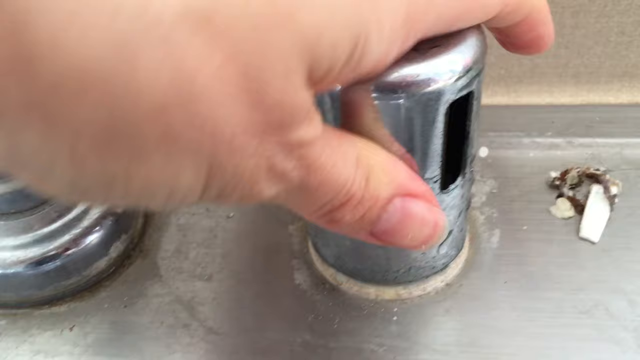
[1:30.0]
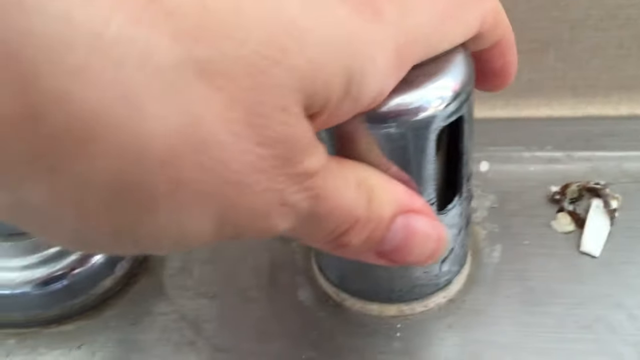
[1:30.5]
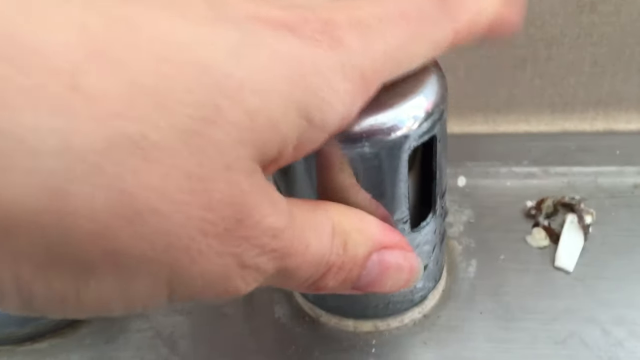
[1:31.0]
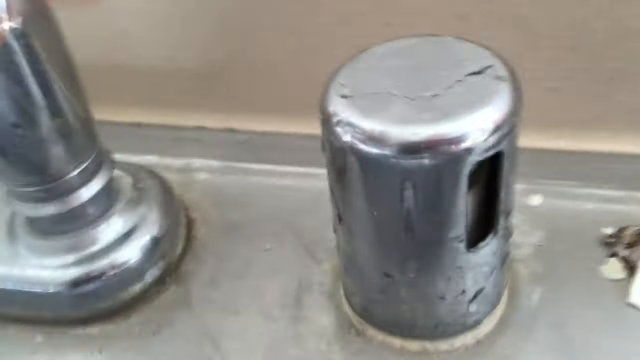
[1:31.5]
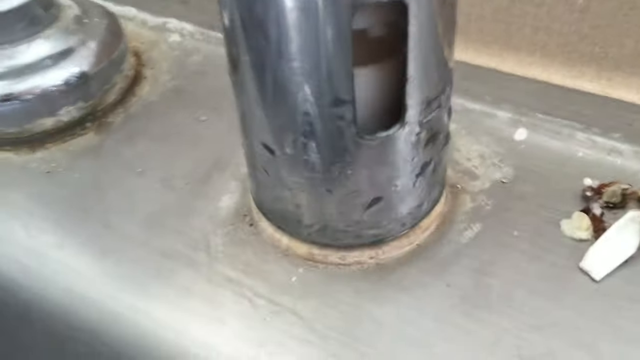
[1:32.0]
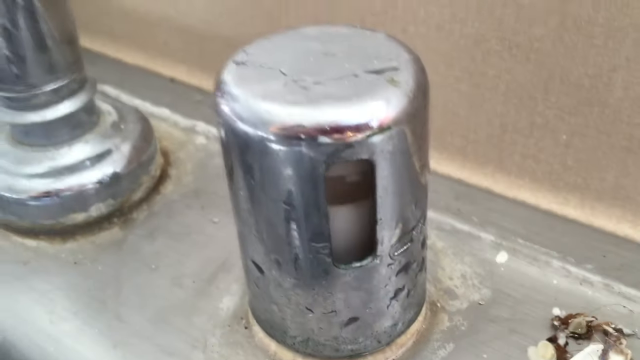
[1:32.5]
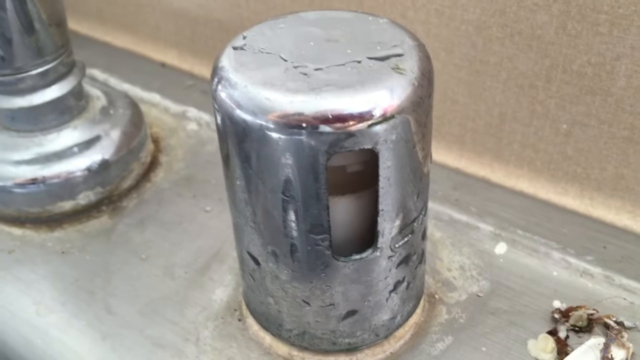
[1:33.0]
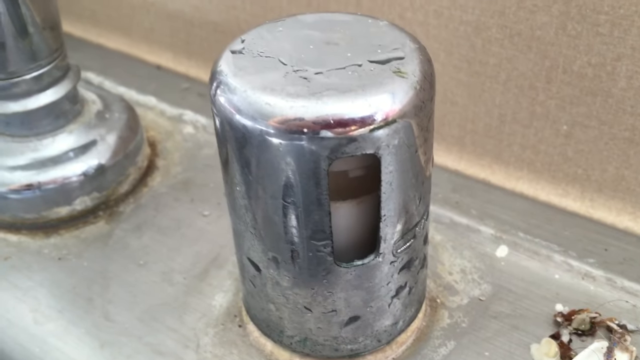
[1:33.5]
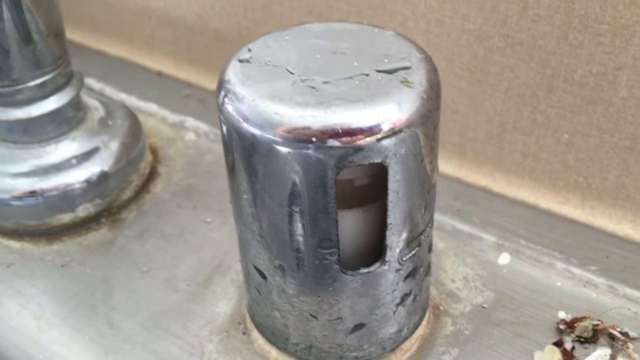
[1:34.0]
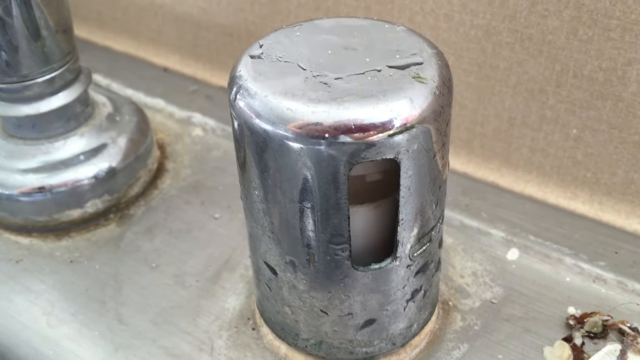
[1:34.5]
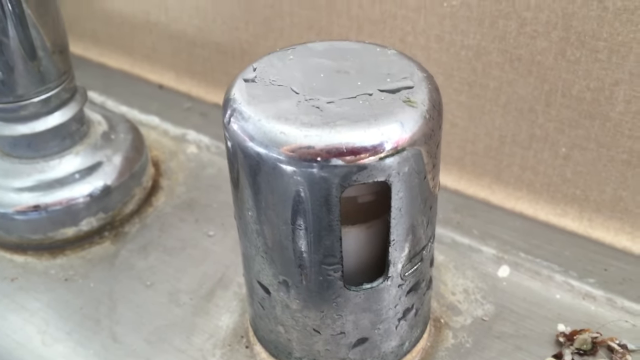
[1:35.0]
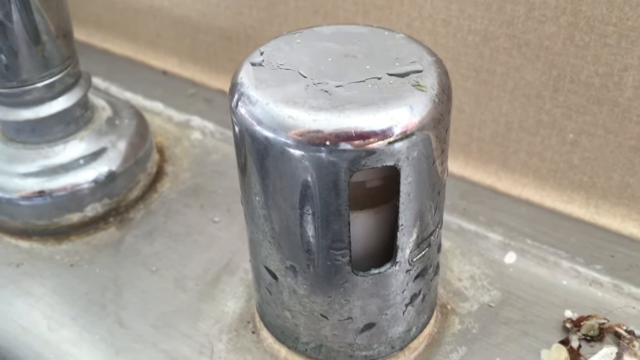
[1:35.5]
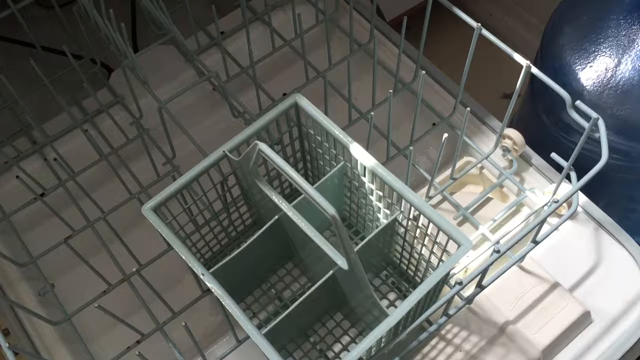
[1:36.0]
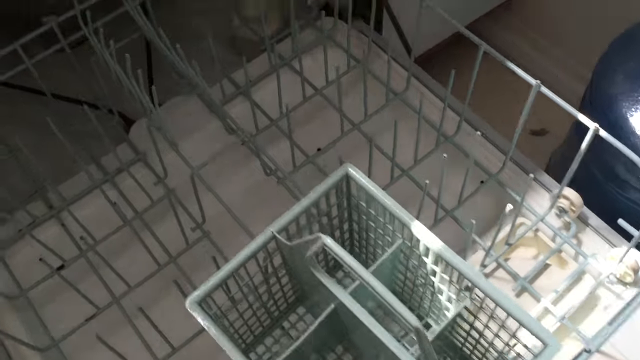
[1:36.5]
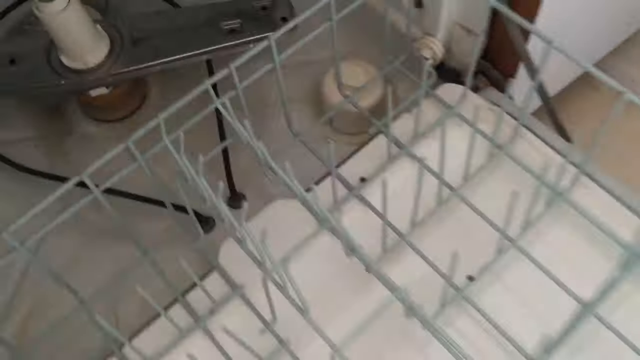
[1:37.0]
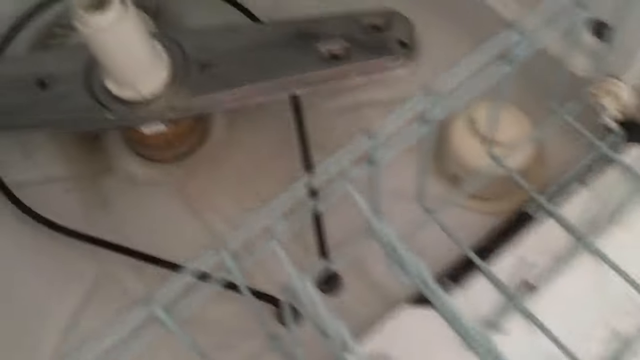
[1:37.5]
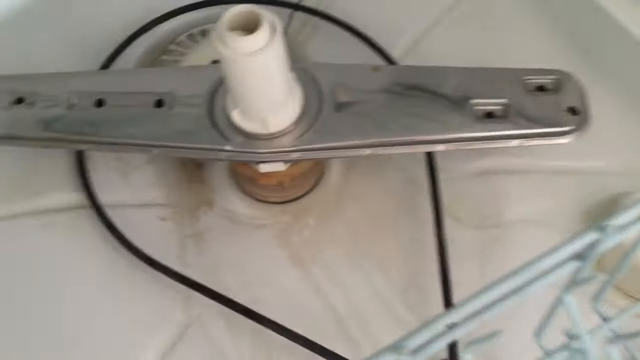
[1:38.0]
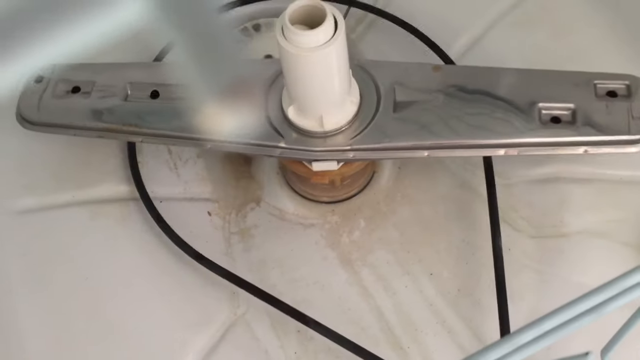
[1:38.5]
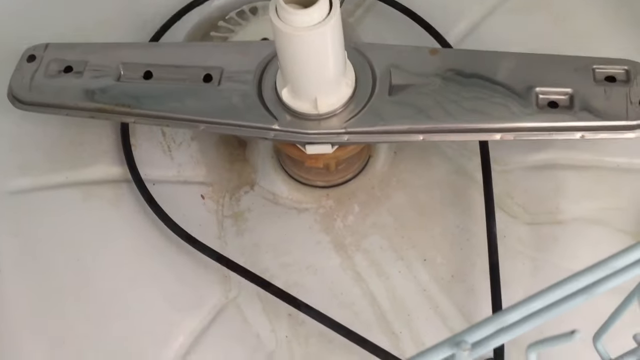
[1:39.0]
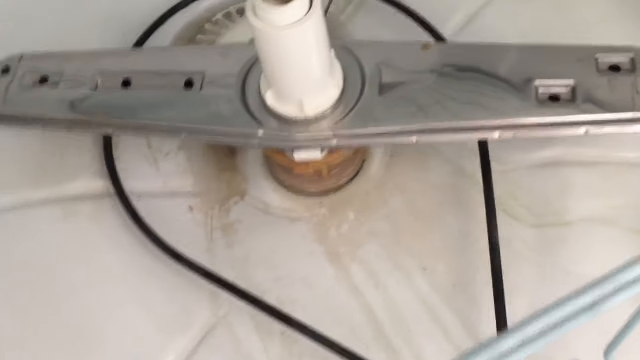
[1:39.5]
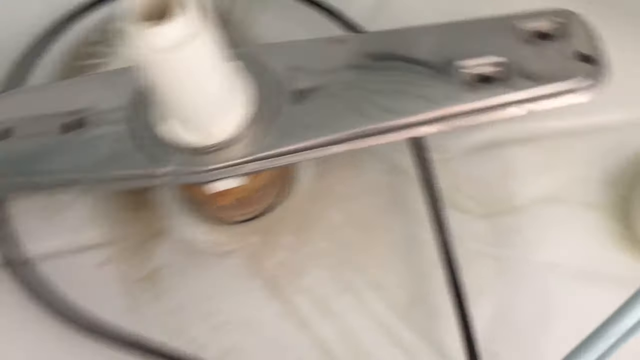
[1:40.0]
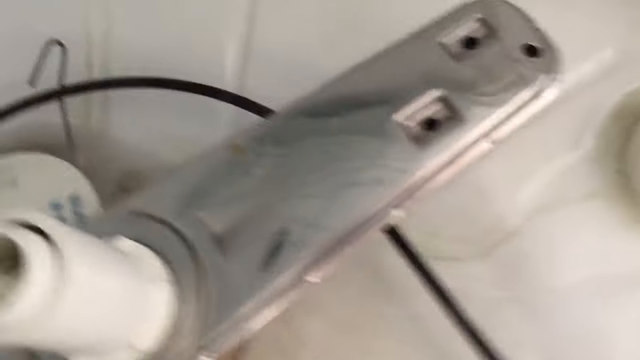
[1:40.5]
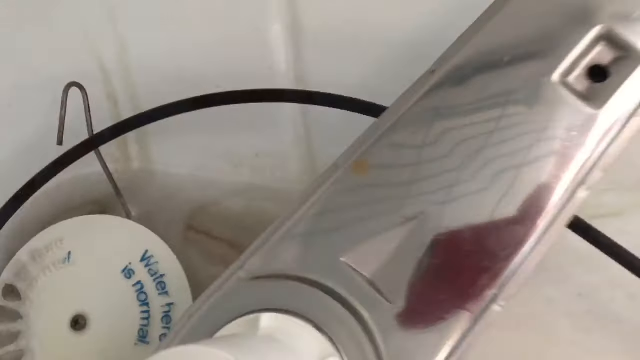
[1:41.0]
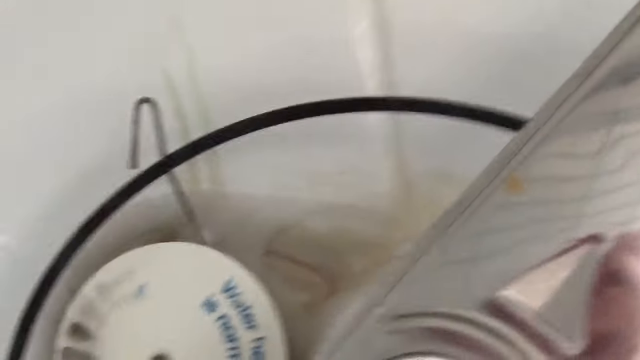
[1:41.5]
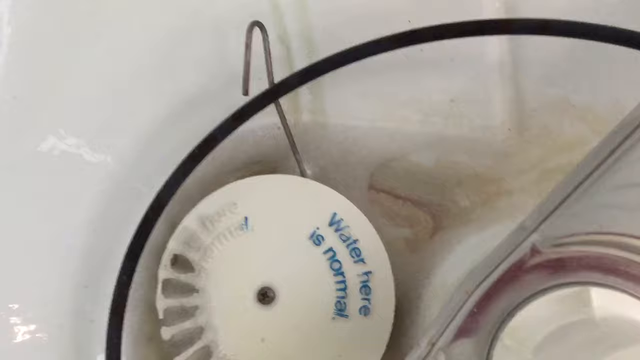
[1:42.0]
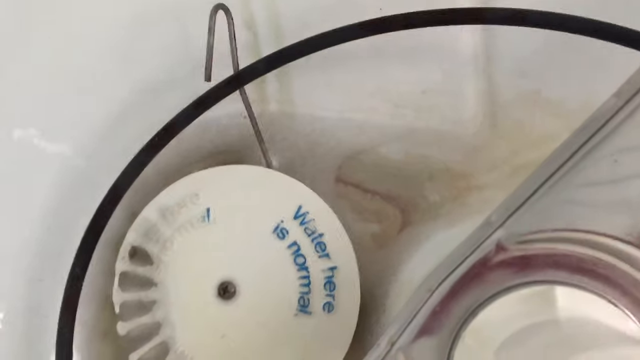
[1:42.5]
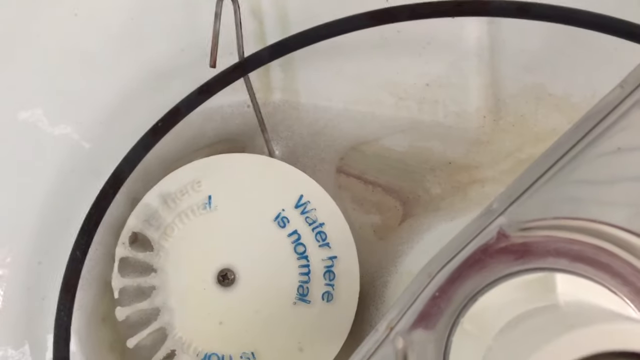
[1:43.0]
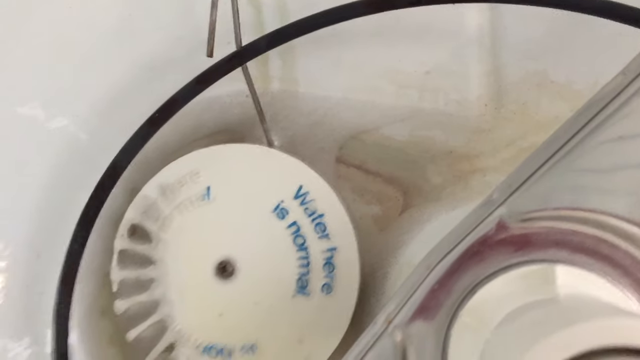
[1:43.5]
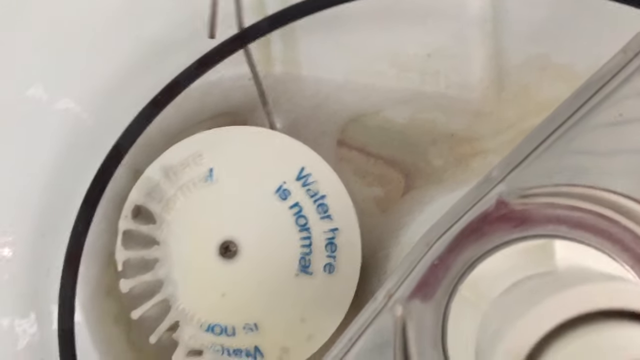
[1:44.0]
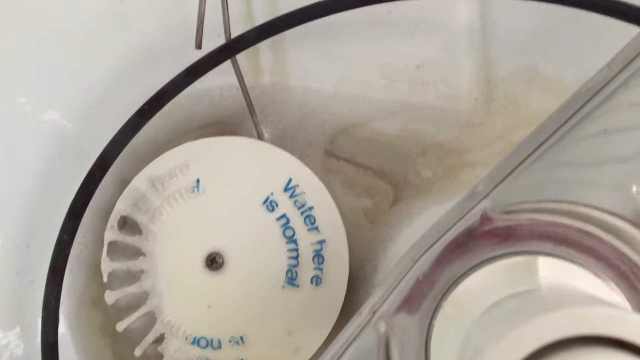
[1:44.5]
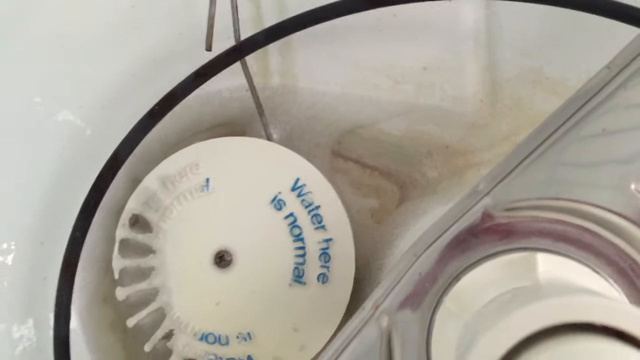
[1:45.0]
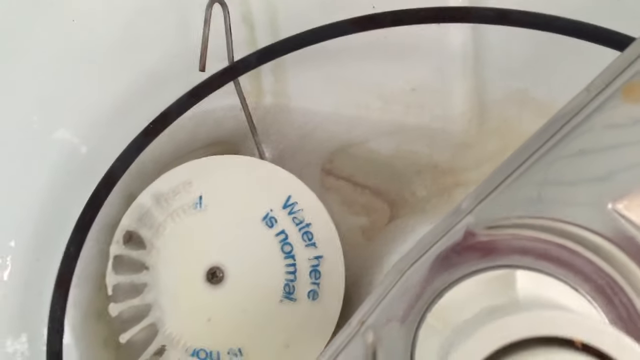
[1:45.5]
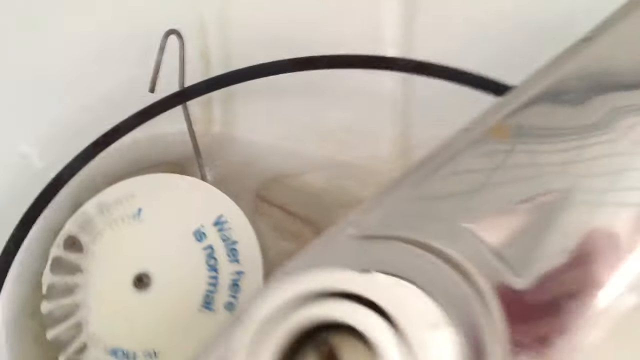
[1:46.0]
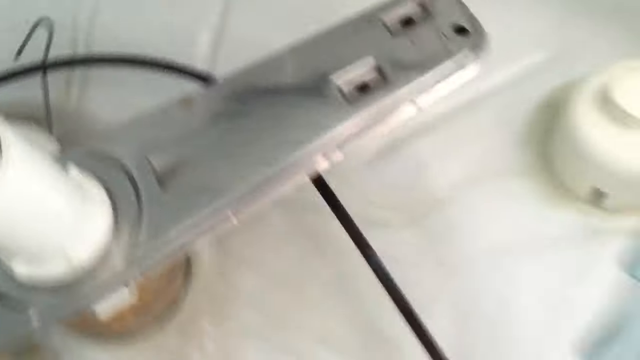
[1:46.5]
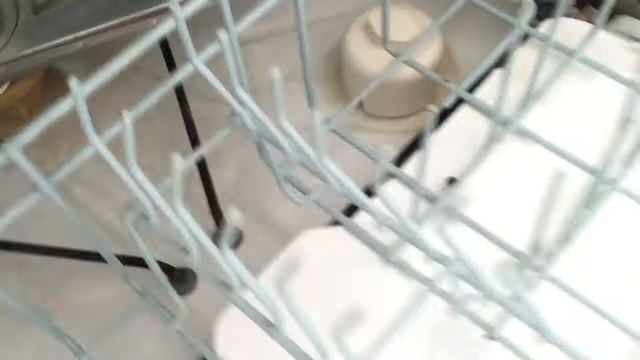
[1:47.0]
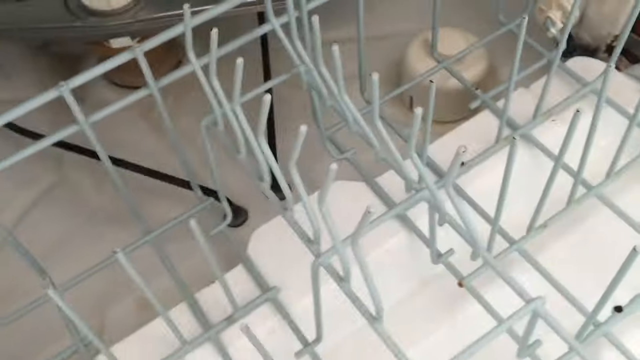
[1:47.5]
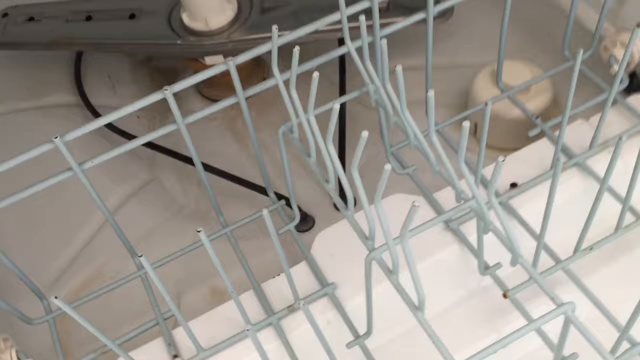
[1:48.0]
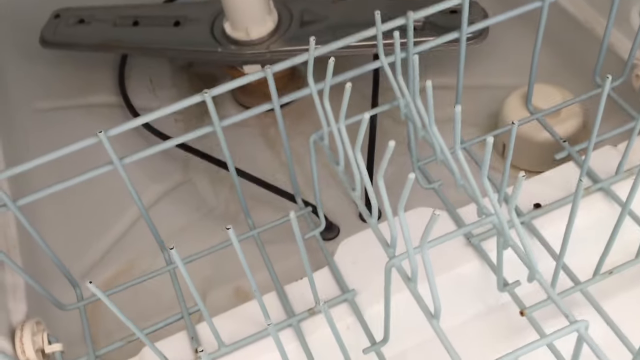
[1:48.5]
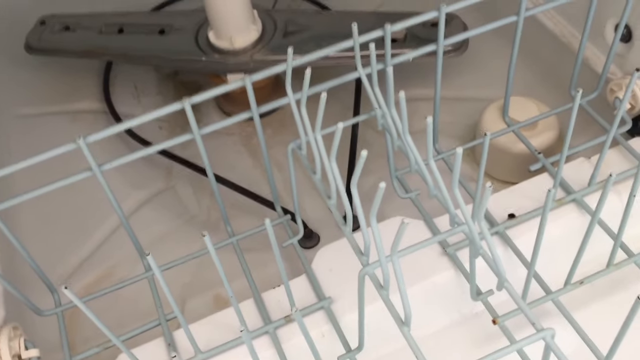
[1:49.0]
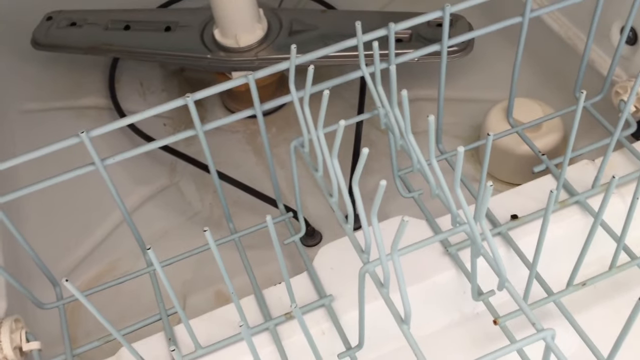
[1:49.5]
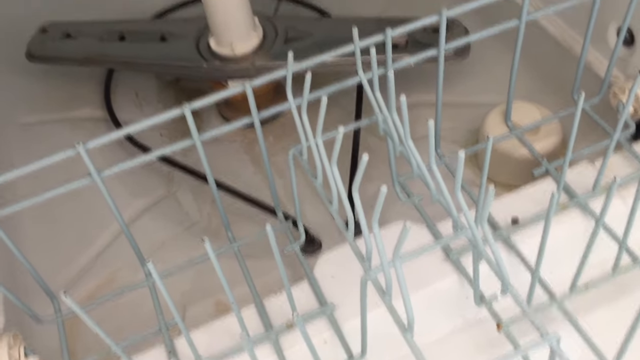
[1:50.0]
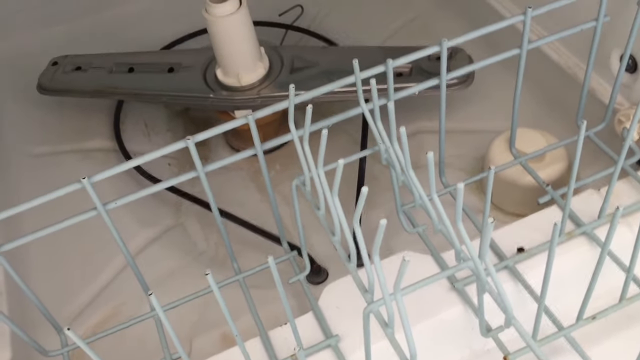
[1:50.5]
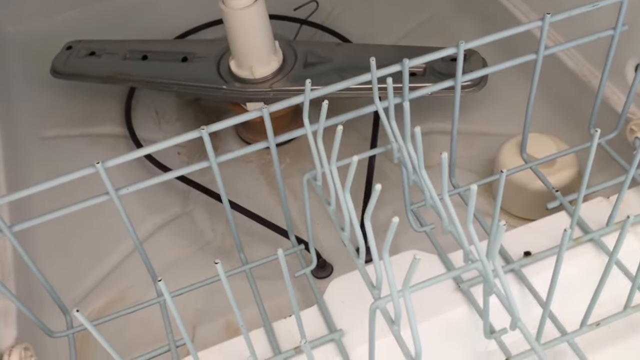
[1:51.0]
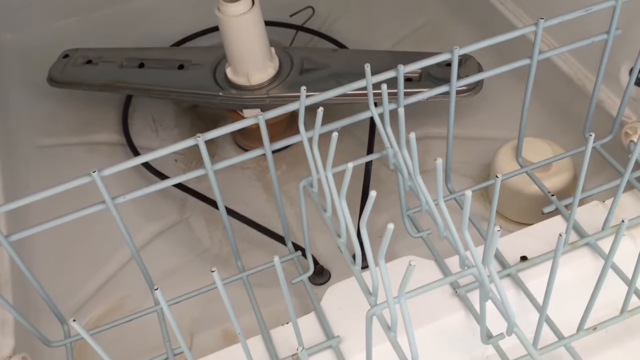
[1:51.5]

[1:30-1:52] A close-up shows the person's left hand with the palm resting on top of the stainless steel cap. The gunk is on the right side of the screen, and the cutout window is on the right side of the cap. The hand sort of rocks the cap into place and is removed, and the camera pans to the right, in front of the cutout section of the cap. With the cap placed, the camera focuses on it for several seconds. The shot then cuts to the inside of the dishwasher: the basket is visible first, then the camera slowly zooms and pans inside the dishwasher area, where it looks like the water has been drained. The camera is taken around from the right side and panned inside, showing a white plastic disc with blue text reading "water here is normal". The camera focuses there for several seconds before moving back out, showing the rack and the inside of the dishwasher once again.